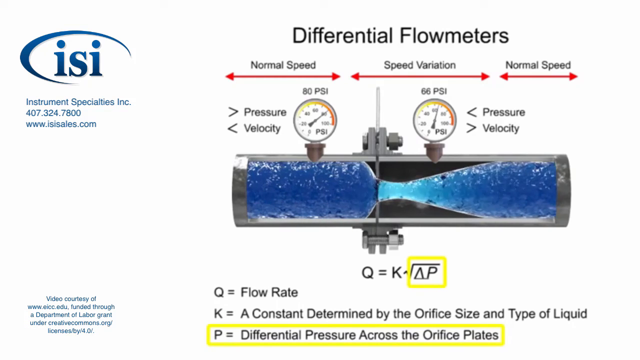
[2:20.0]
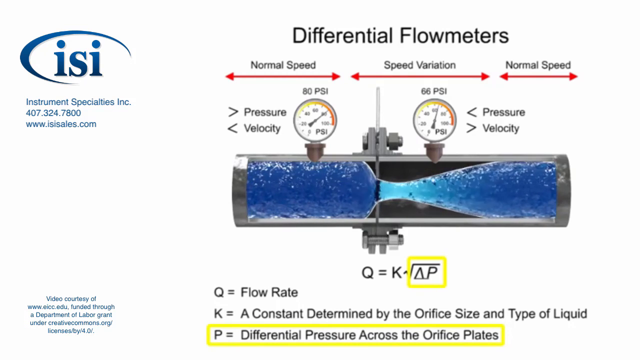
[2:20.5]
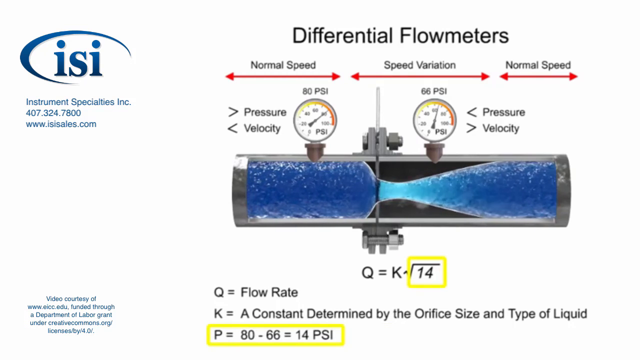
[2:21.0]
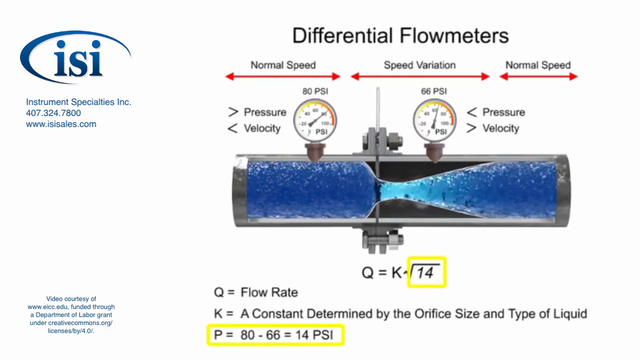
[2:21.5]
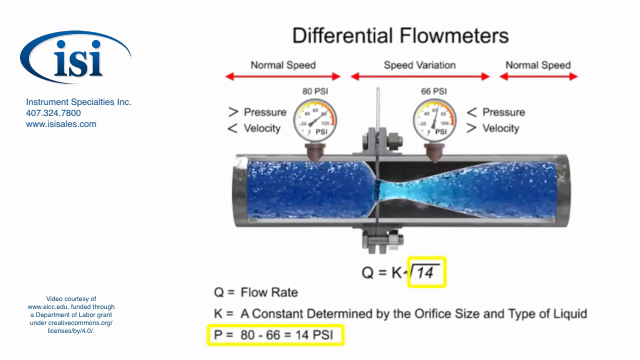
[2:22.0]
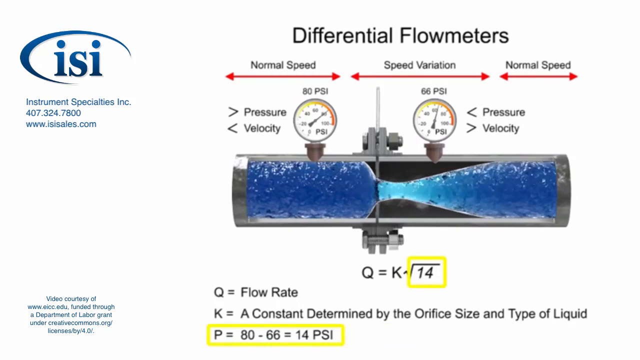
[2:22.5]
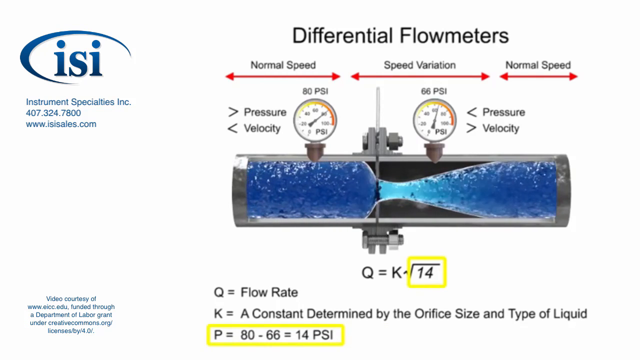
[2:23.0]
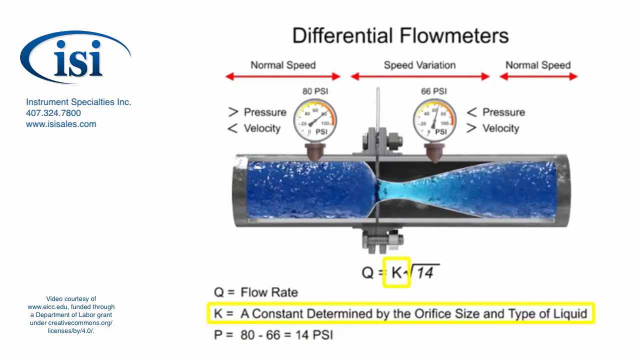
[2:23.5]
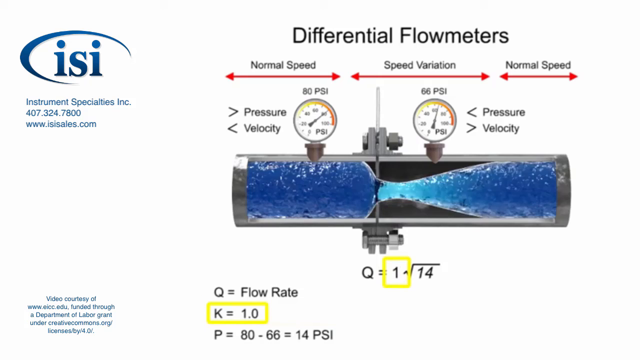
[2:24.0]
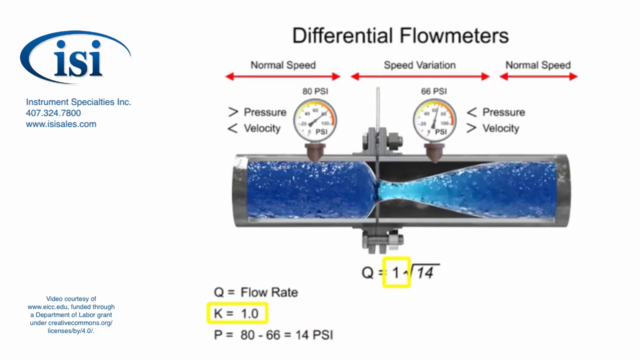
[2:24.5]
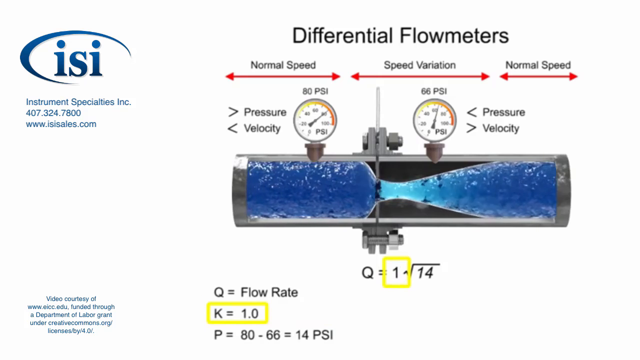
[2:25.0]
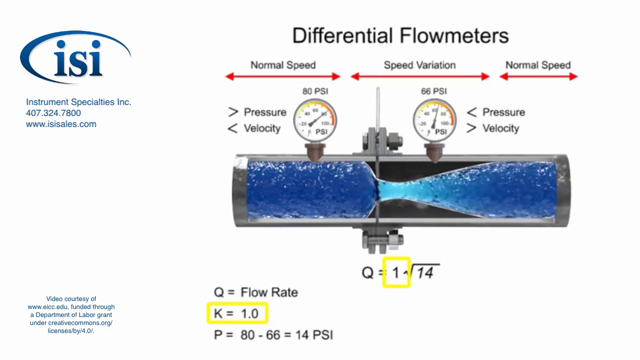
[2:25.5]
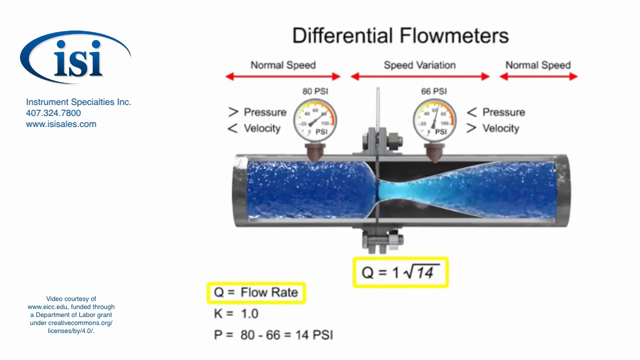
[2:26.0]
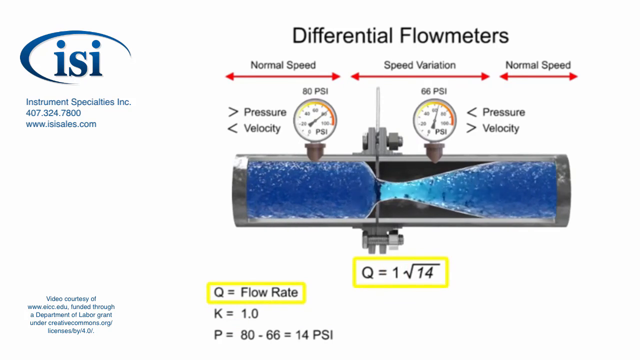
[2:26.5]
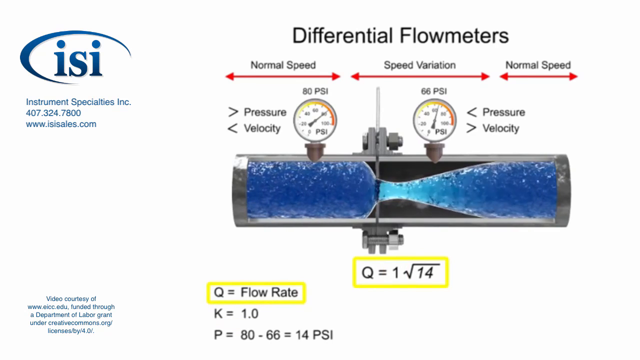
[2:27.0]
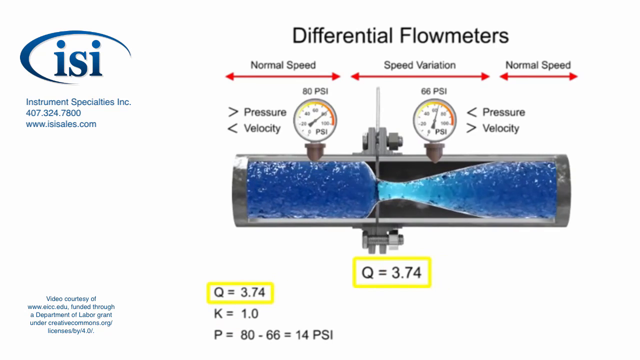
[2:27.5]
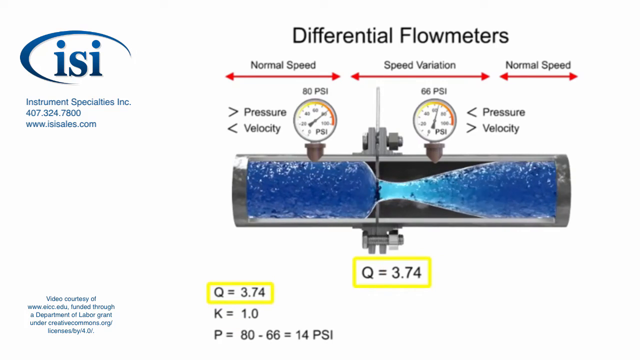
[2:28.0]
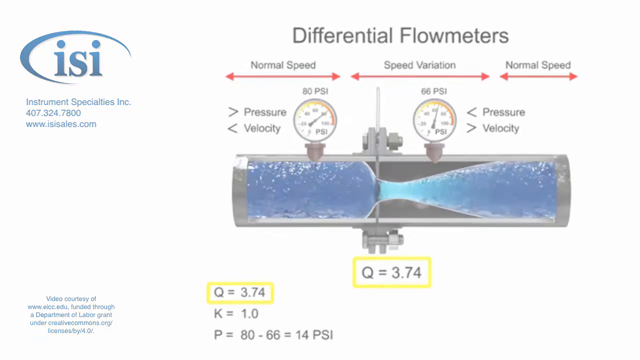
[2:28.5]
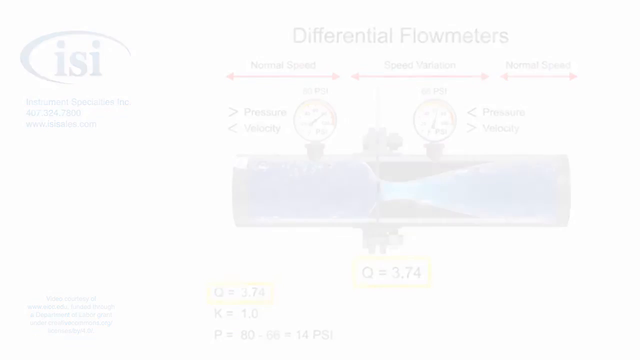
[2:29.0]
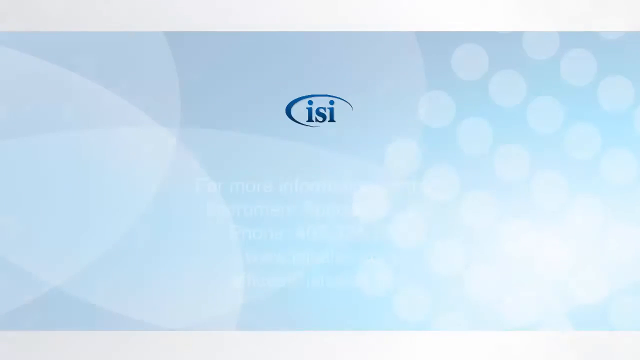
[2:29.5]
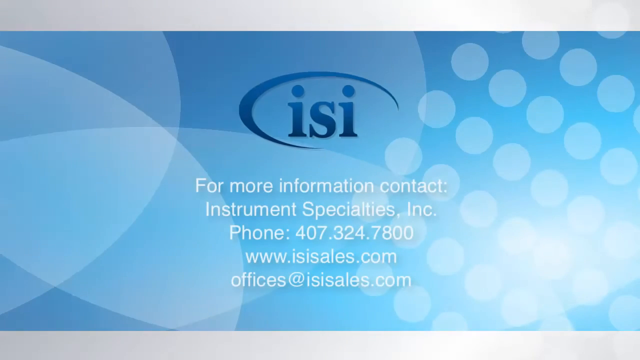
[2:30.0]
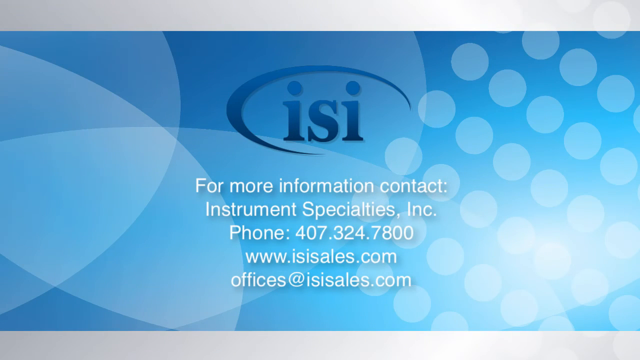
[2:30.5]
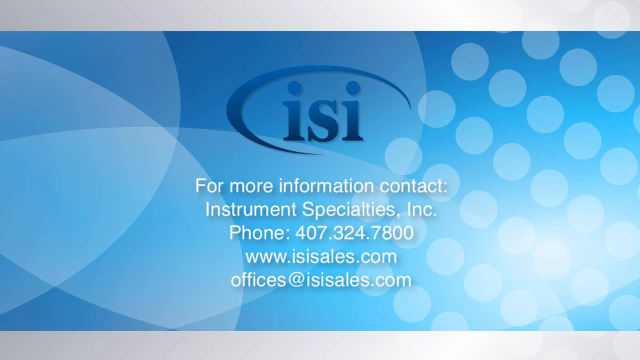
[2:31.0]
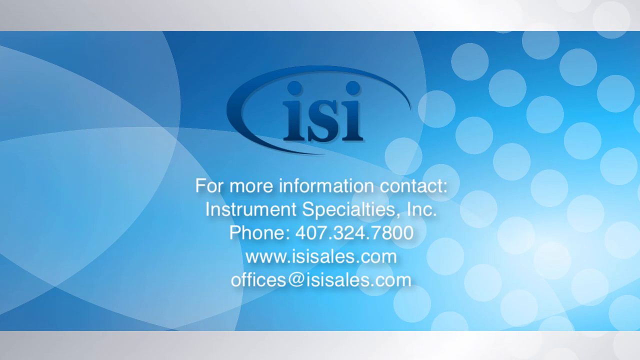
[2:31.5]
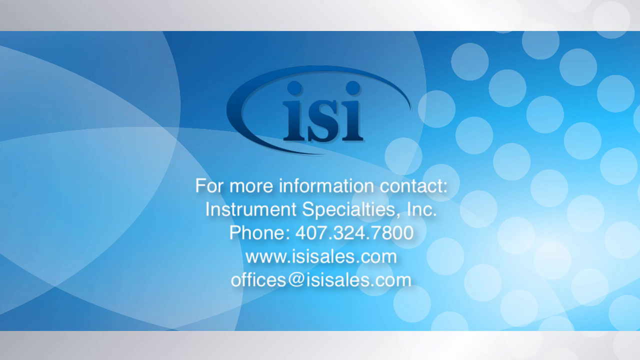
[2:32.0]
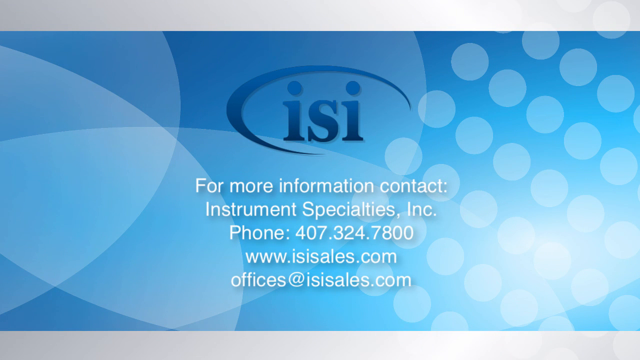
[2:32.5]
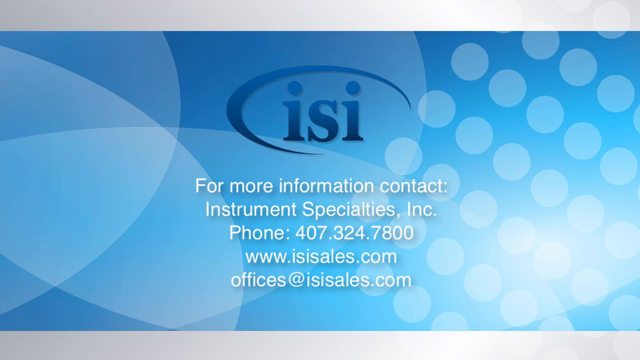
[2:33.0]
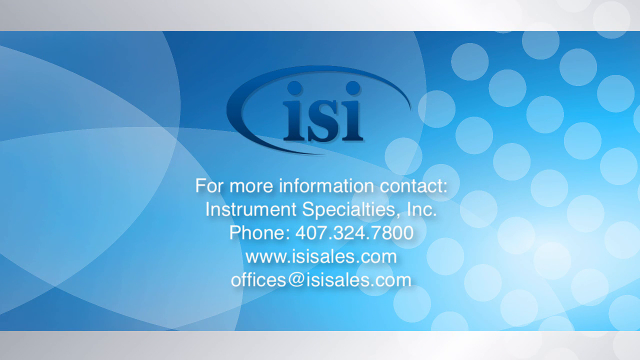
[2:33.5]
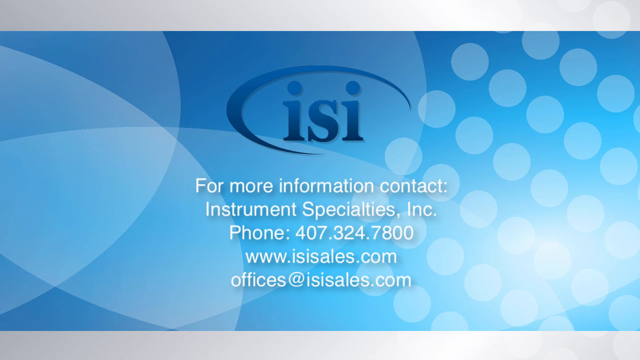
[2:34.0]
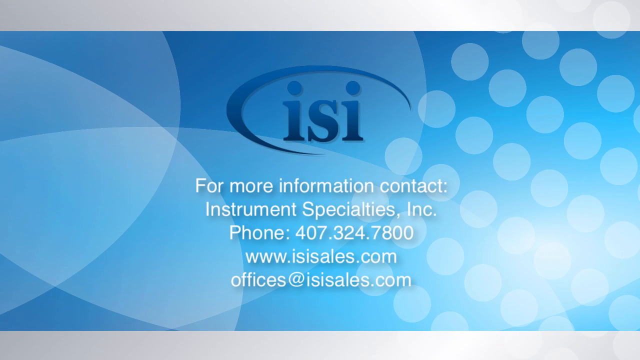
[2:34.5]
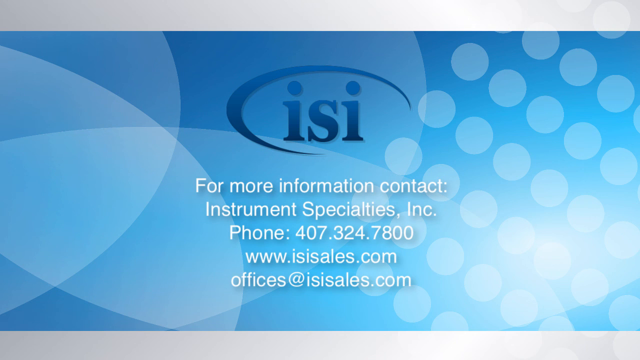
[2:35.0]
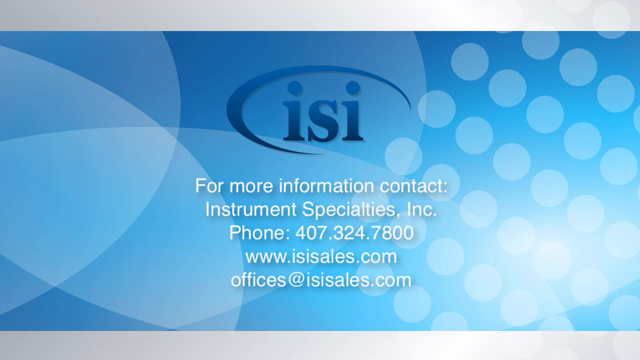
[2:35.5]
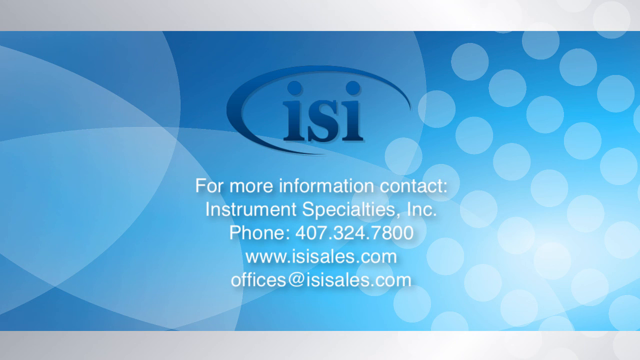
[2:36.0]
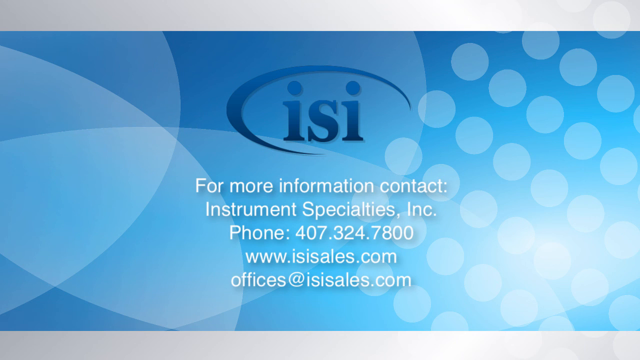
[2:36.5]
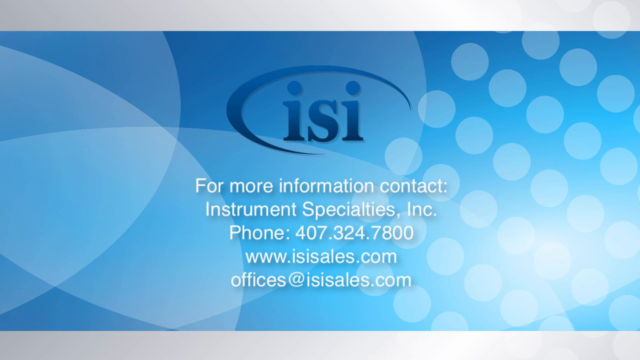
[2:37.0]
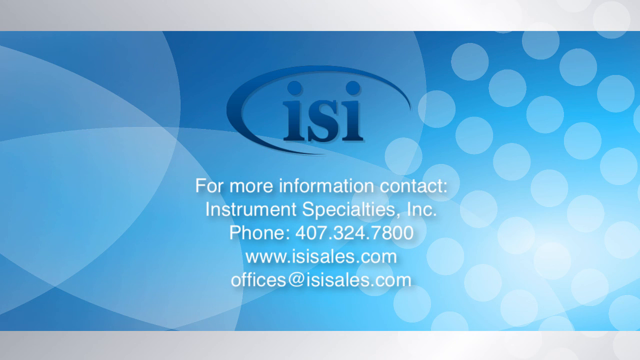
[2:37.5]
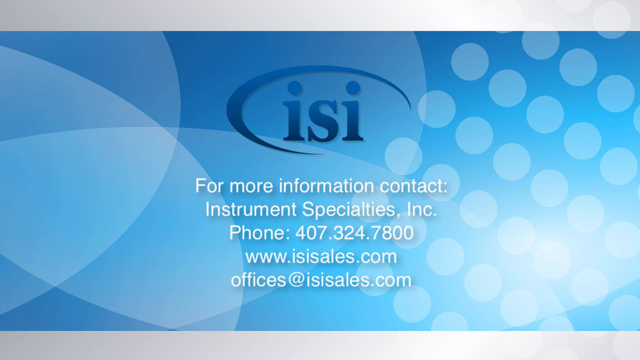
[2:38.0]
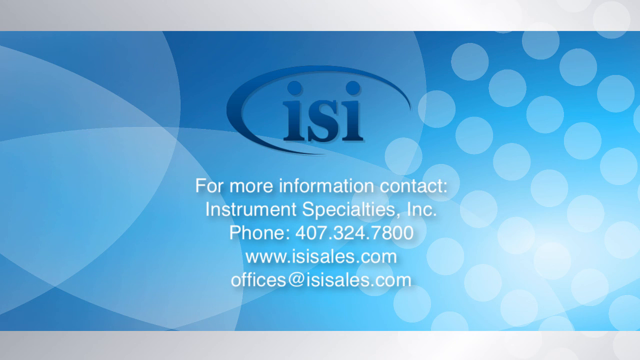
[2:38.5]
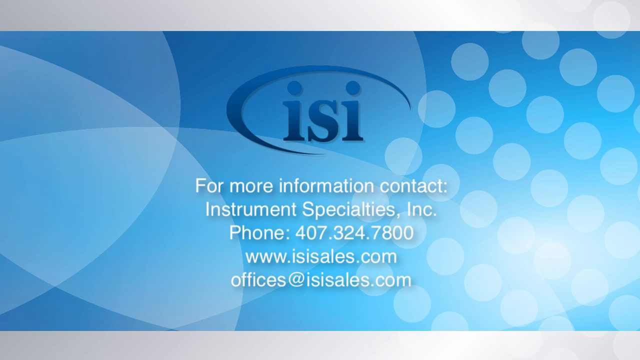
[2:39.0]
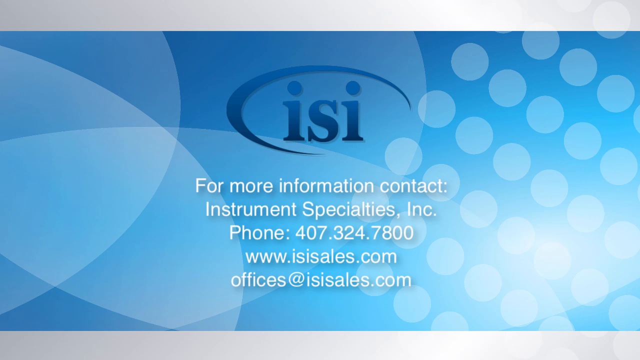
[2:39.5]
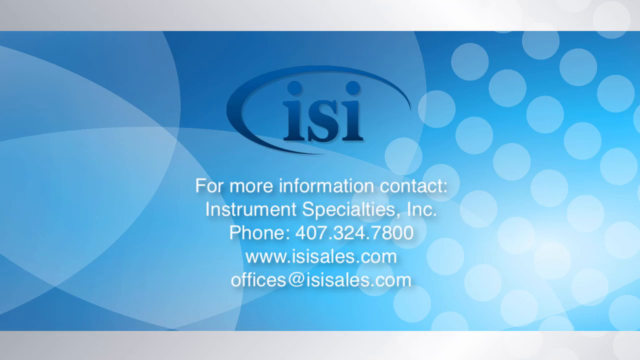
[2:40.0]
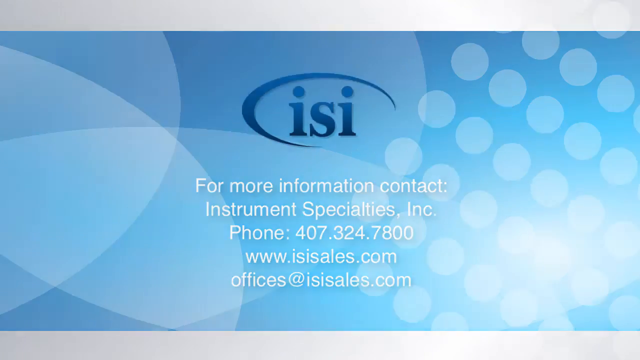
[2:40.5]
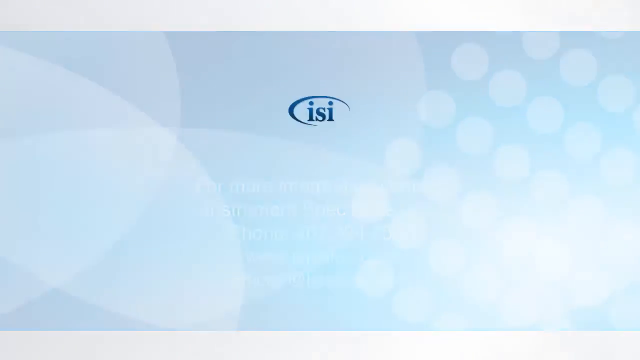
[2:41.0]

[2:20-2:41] An animation of a pipe shows water flowing through it. On the left side of the pipe the water is dark blue; as it gets to the middle it passes through the flange, where the pipe narrows. Then the water goes back to dark blue on the right side of the pipe. Below the pipe, in black, it says Q equals K times the square root of AP, then Q equals flow and K equals a constant determined by the orifice size. Then another equation appears: Q equals one times the square root of 14. It says Q equals flow rate, K equals 1.0, and P equals 80 minus 66. Then the video goes to a blue screen and the ISI logo appears. Below it, in white letters, it says "for more information, contact Instrument Specialist, Inc., phone 407-324-7800". Below that is the website "www.isicells.com", and below that "offices at isicells.com".